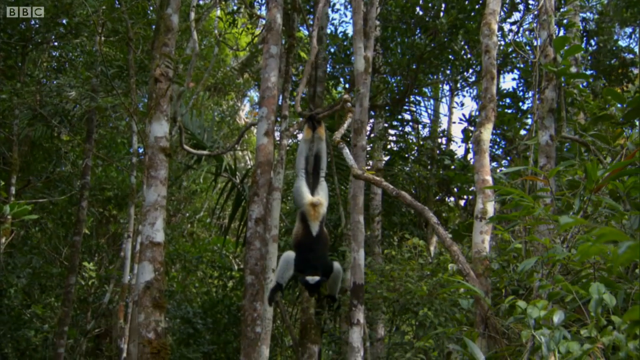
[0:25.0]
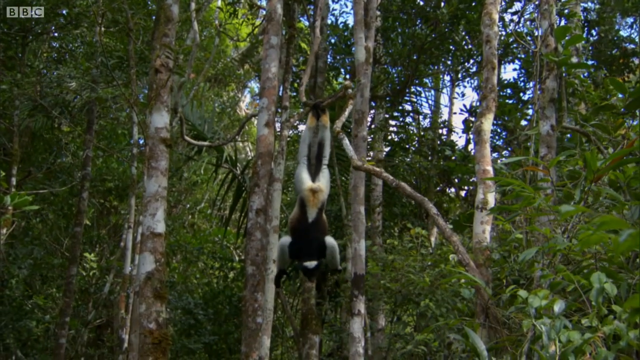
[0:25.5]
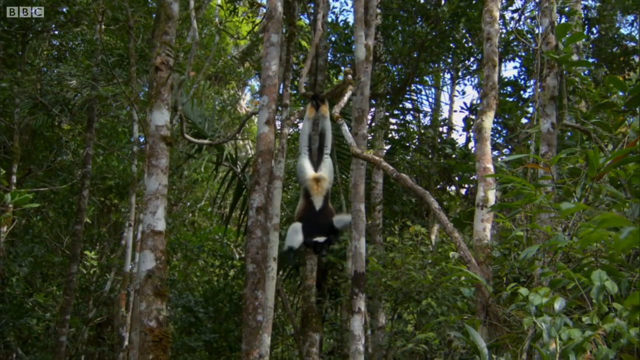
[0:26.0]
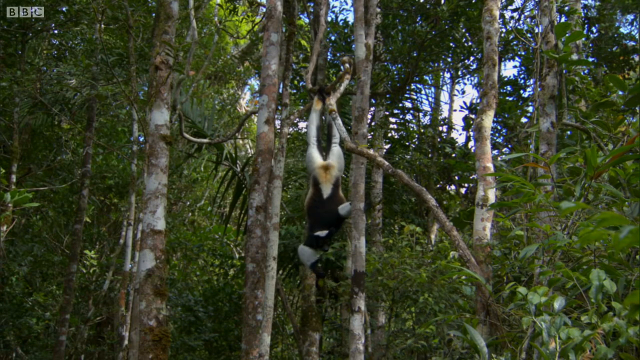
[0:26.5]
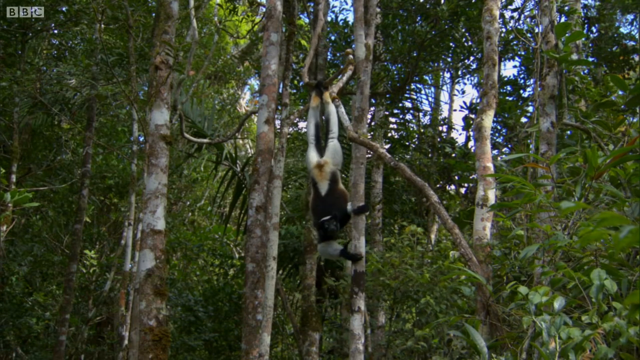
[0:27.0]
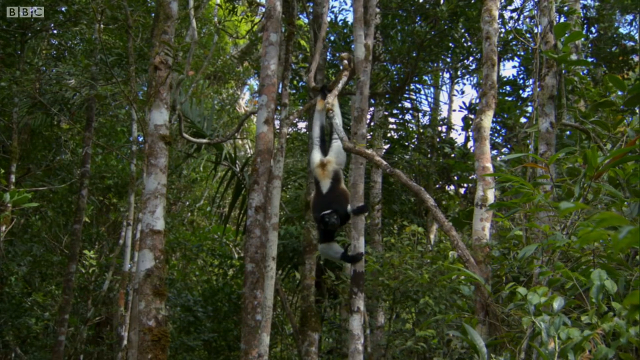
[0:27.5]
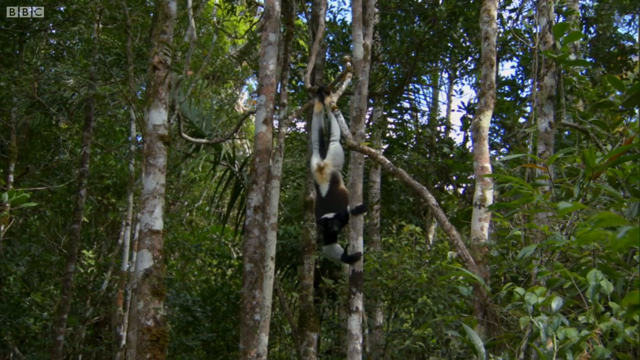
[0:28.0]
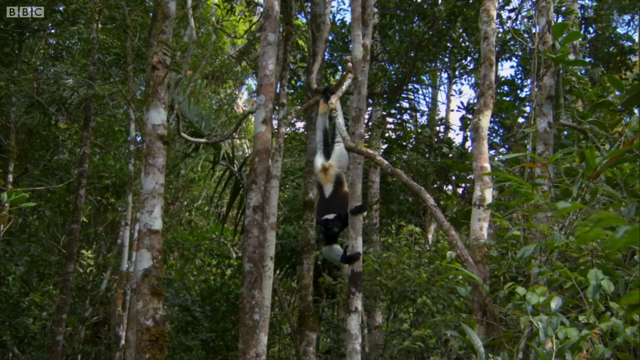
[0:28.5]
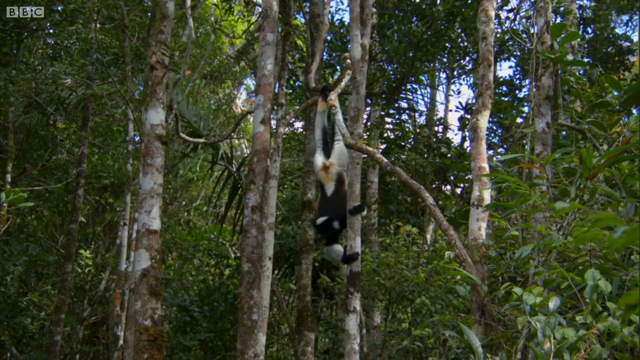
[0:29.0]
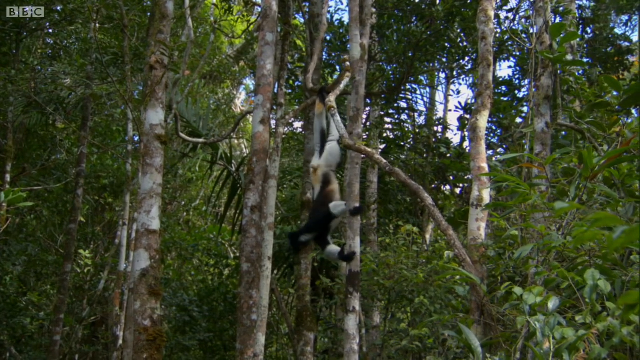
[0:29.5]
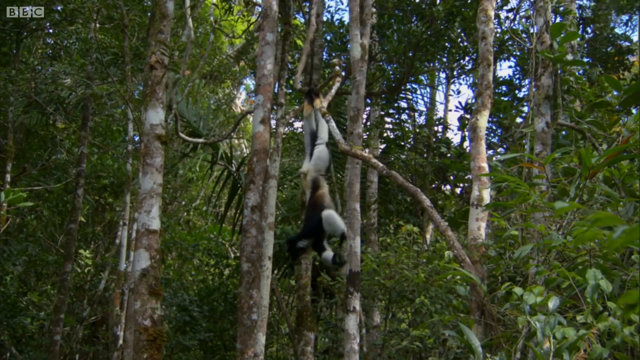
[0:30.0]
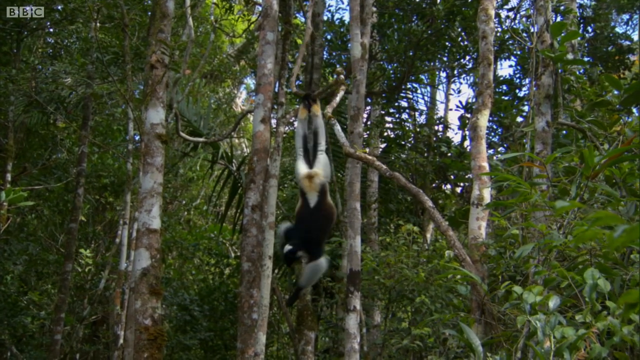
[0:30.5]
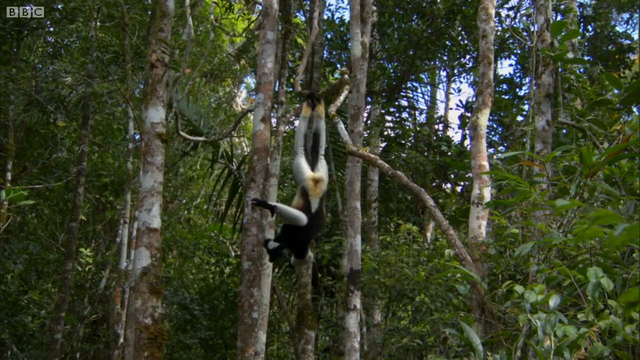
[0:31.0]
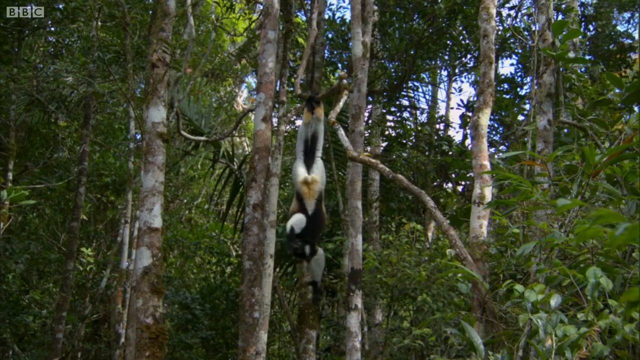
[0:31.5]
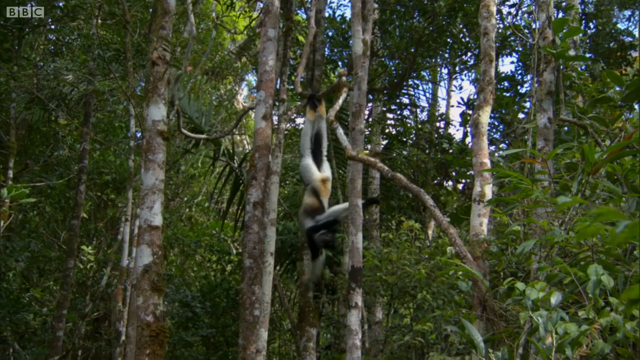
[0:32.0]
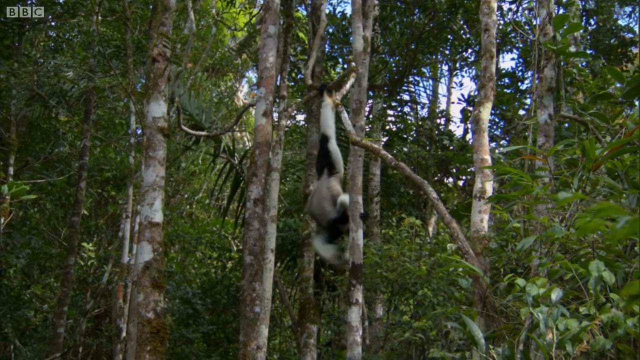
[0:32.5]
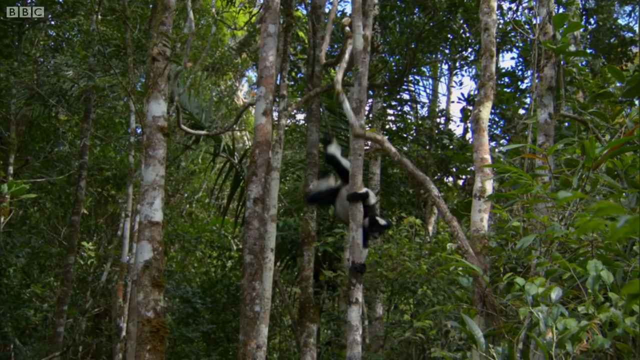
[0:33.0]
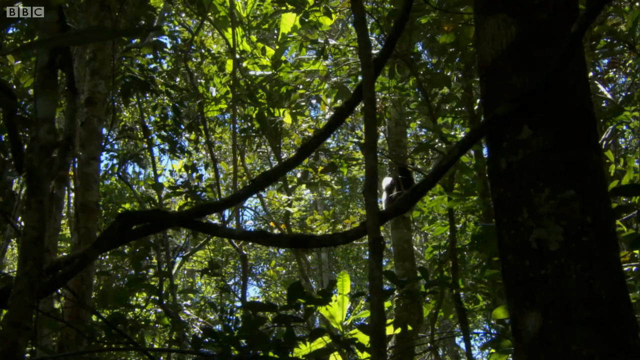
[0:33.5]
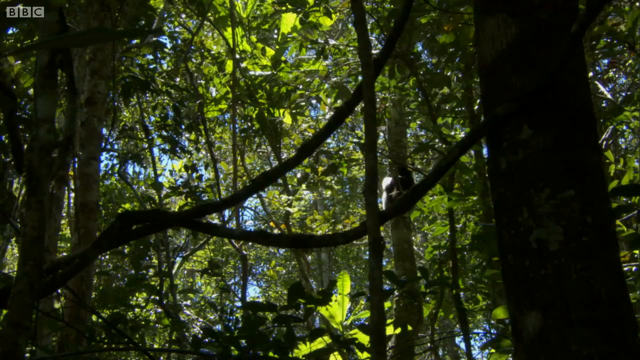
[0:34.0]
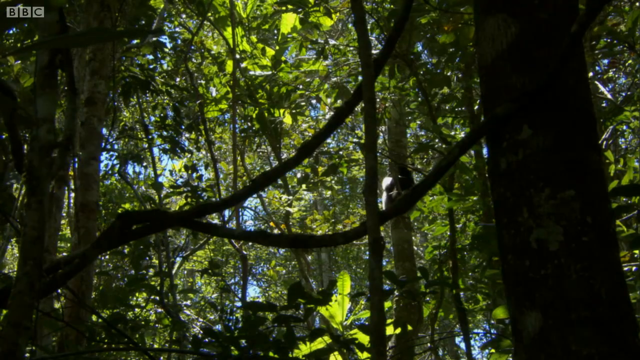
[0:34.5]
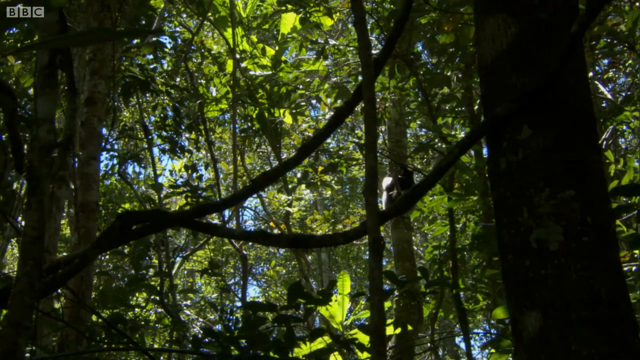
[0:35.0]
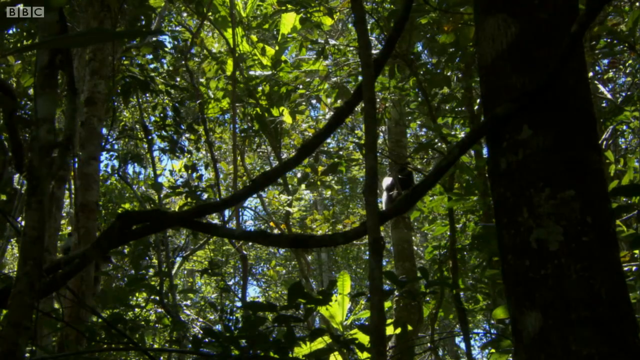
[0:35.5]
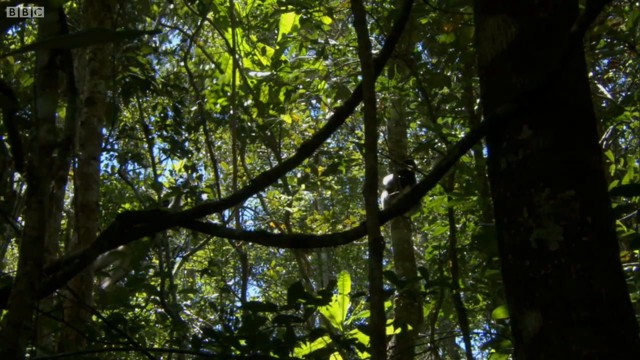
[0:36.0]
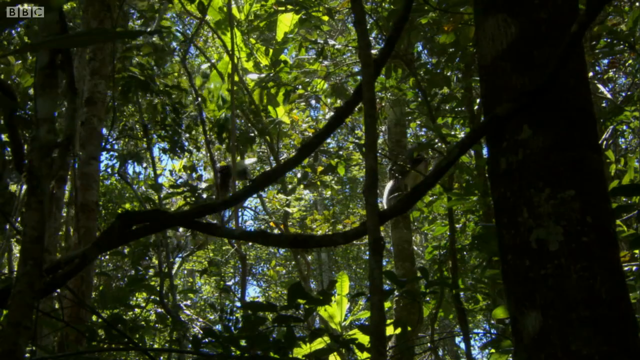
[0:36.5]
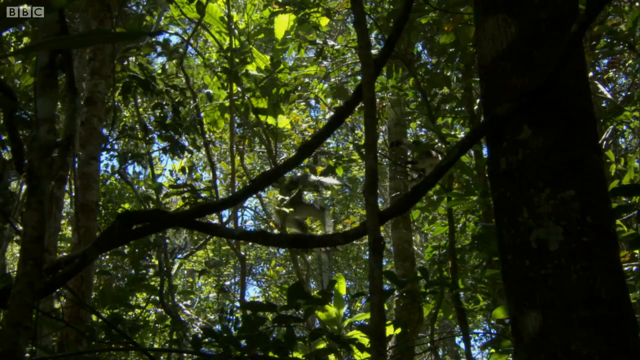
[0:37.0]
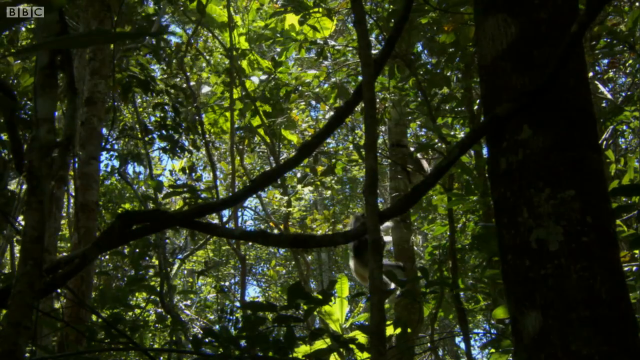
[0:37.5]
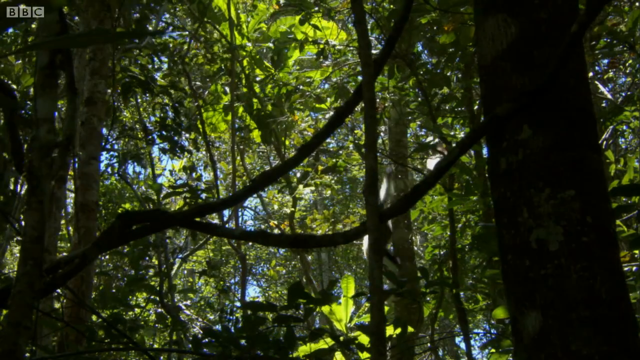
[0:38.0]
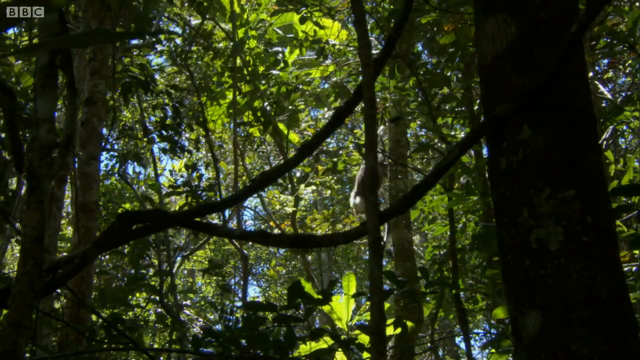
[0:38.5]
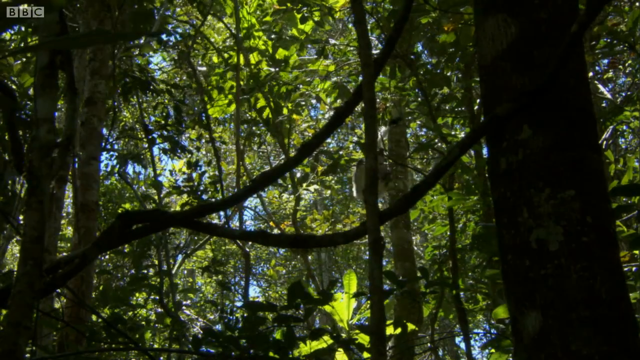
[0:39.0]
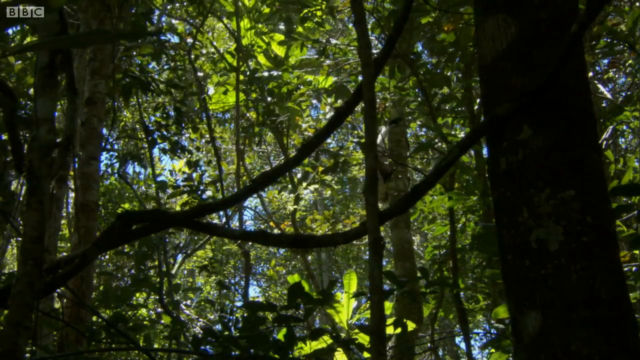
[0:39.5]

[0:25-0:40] The lemur hangs upside down from the branches of a tree, swinging its arms. It then grabs onto a tree trunk and starts leaping from tree to tree through a densely packed forest, grabbing different branches and trunks as it goes. It leaps very gracefully, almost as if in slow motion. The lemur is covered in mostly black, white and gray fur, has long fingers, and seems very agile. Another lemur, barely visible in the background, is also leaping; when the first lemur comes close, the second one jumps away.